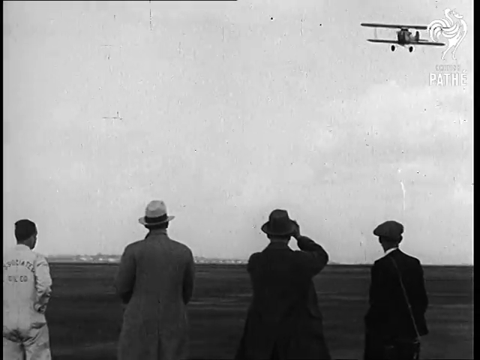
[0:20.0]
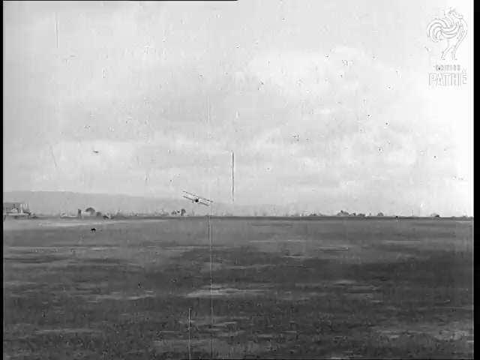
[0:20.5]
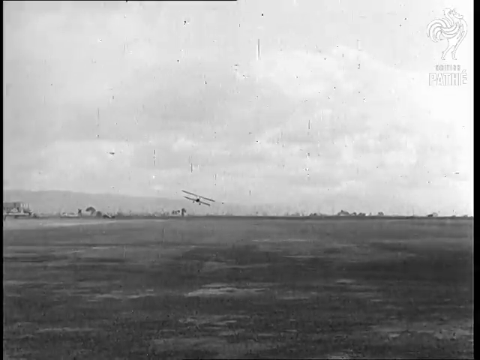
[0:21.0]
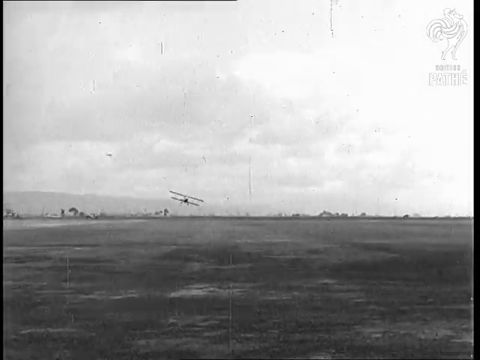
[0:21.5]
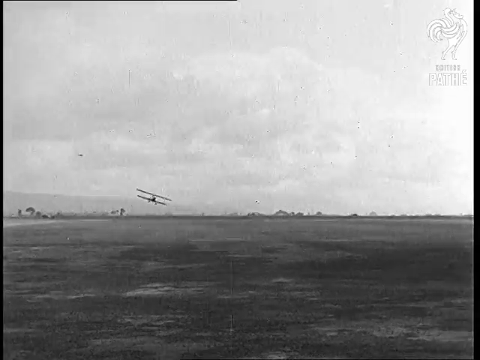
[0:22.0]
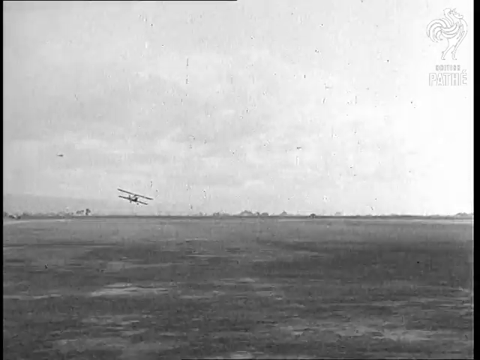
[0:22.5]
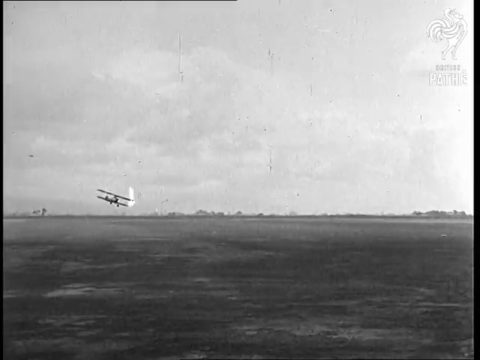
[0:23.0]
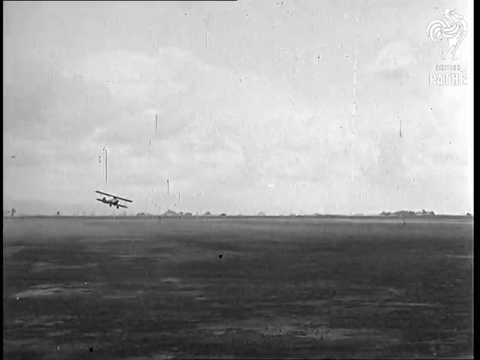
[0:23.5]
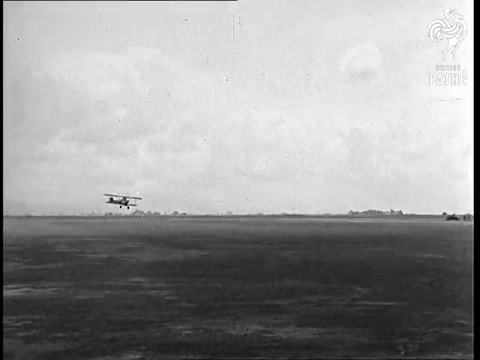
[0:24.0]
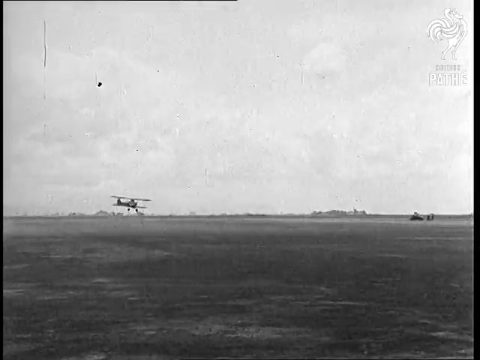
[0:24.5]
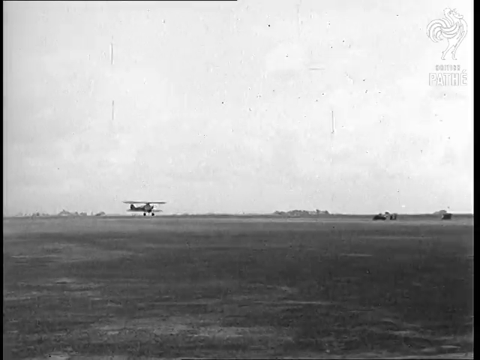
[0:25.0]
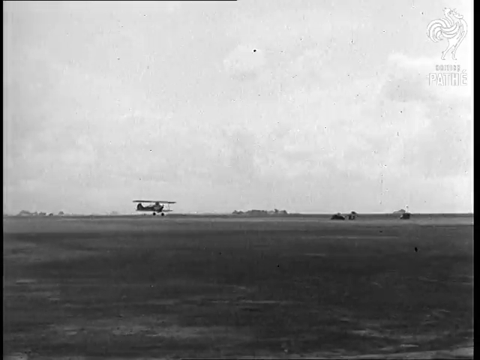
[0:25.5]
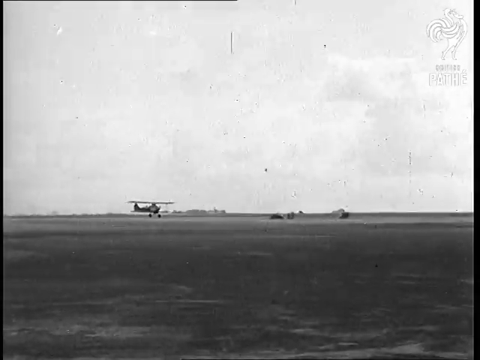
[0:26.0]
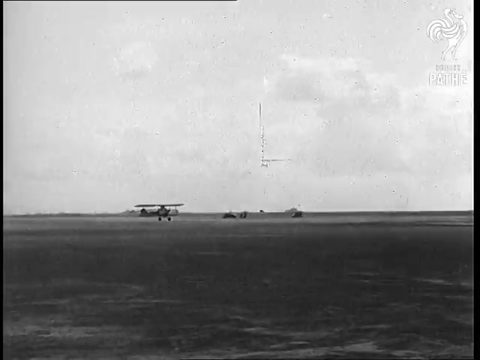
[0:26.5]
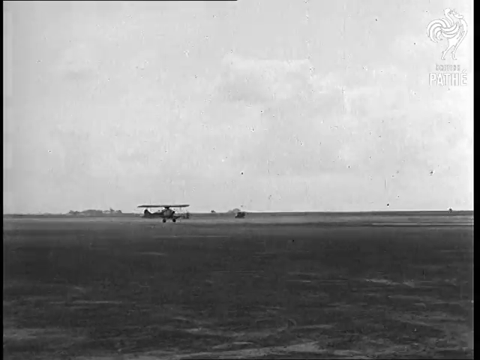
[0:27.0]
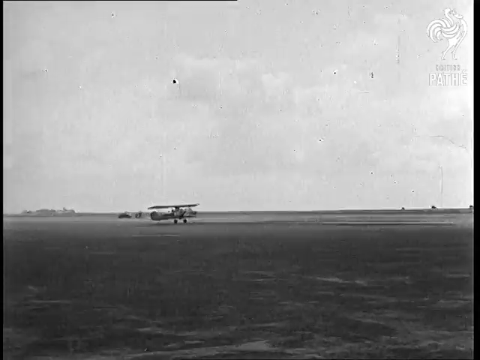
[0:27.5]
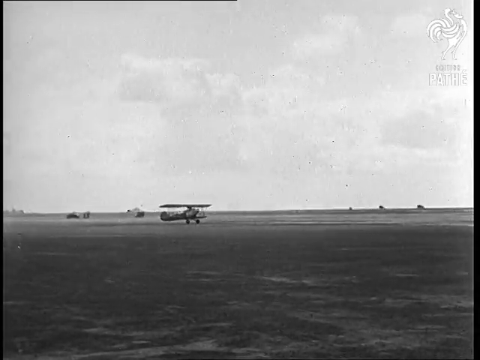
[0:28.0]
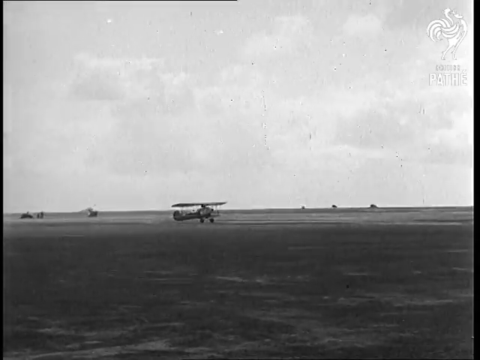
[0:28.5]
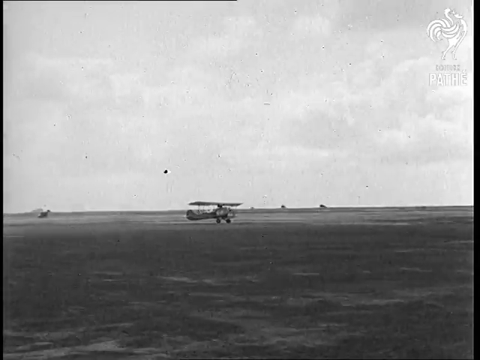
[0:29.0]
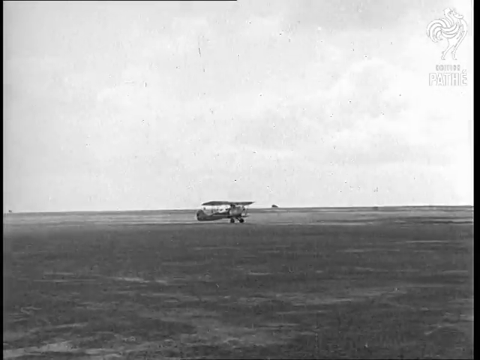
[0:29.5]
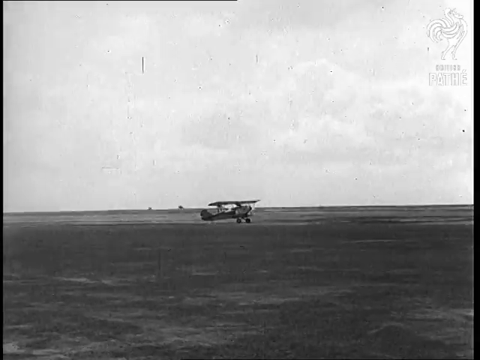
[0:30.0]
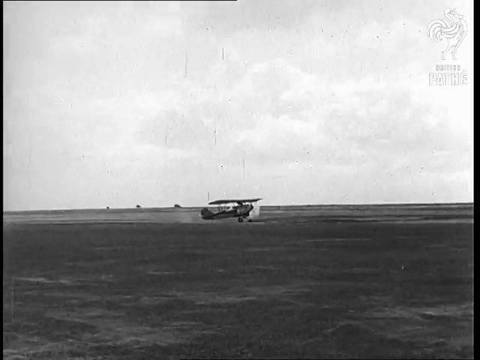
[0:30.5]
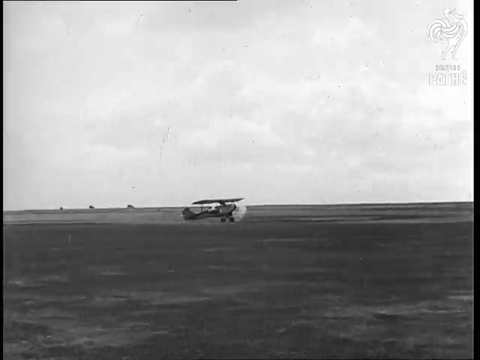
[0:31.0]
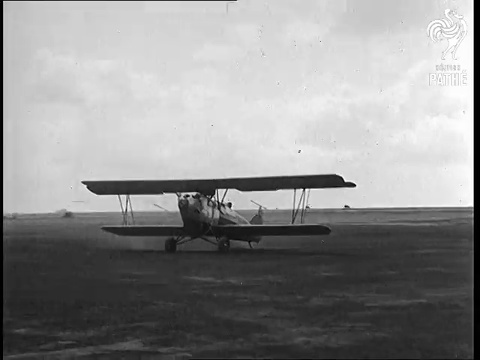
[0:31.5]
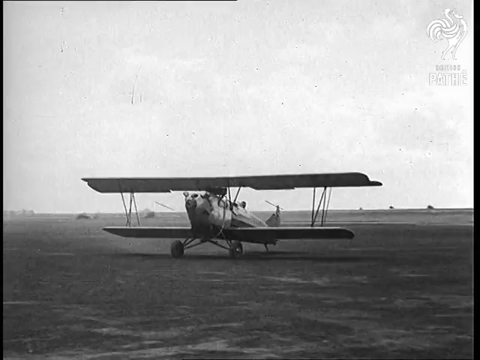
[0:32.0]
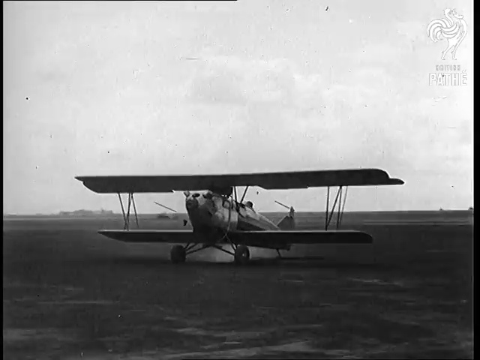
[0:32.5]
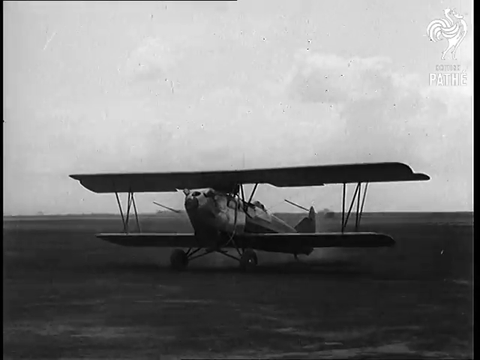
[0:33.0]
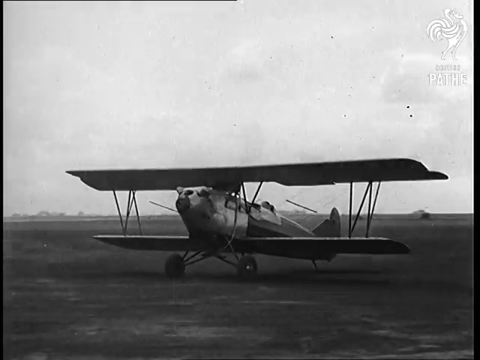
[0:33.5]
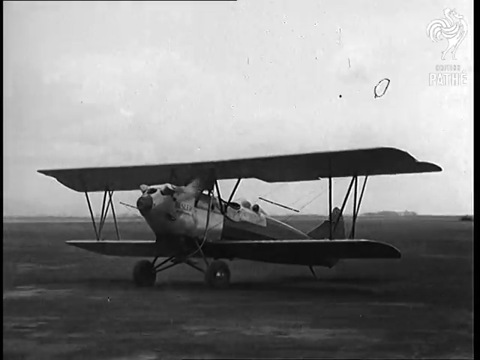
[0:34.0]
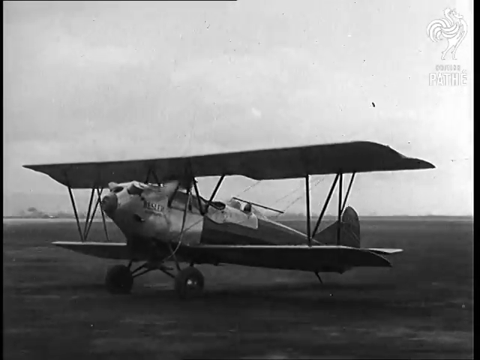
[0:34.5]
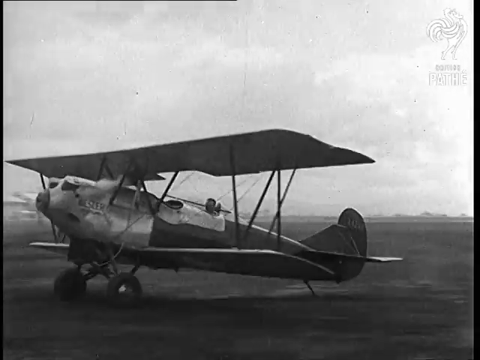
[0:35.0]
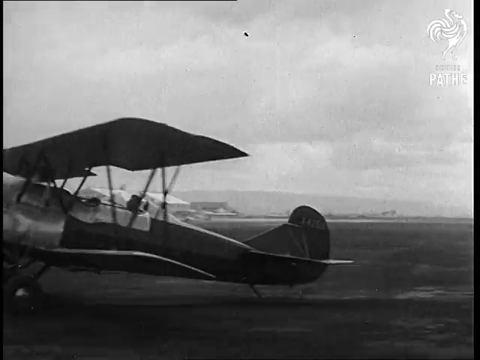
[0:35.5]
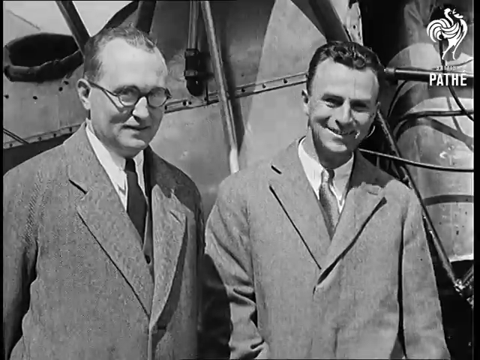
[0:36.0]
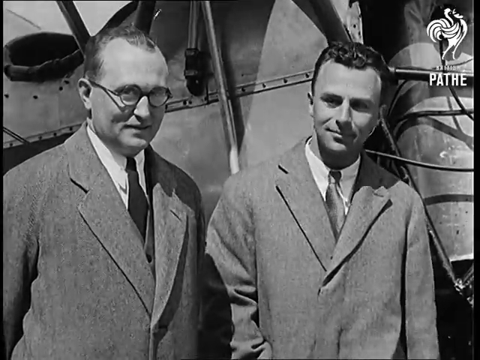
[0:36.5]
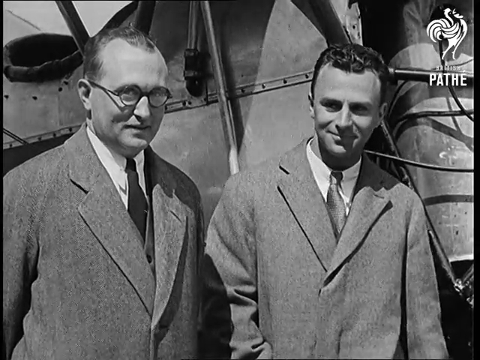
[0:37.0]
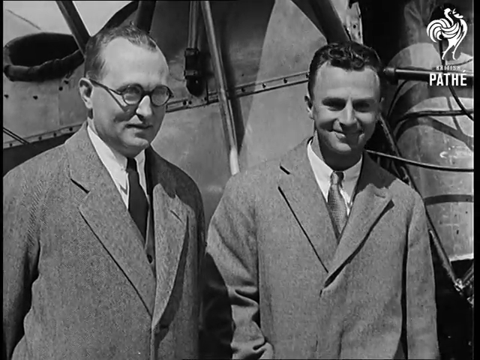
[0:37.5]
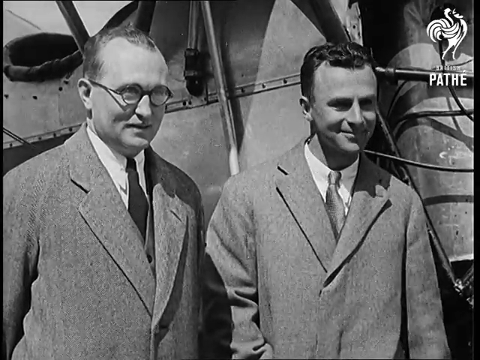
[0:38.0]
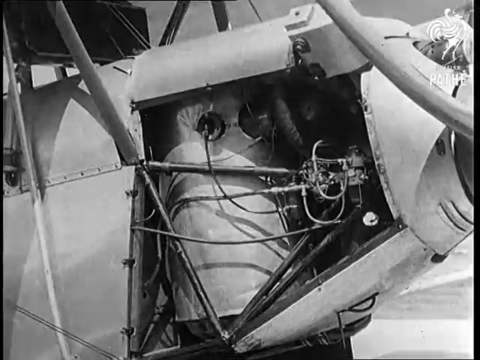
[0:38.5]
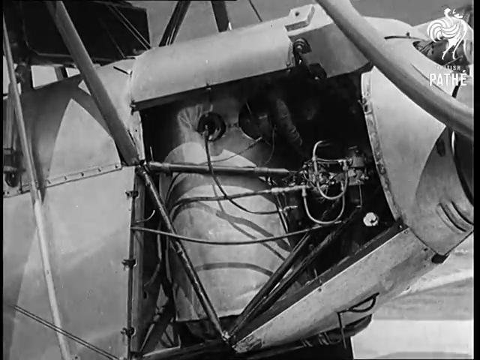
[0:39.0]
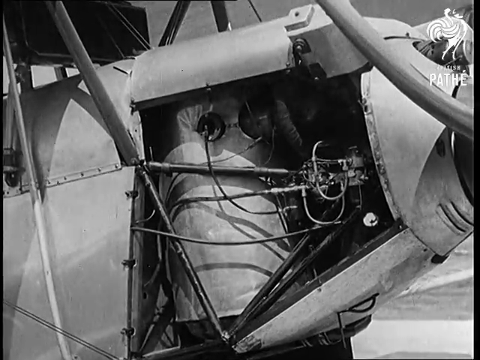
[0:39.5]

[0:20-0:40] The airplane is in the distance and almost coming toward the camera, flying very low, apparently maybe 30 to 40 feet off the ground. It then appears to be landing, moving roughly from left to right, and comes to a stop in the middle of the screen. The view transitions to what is possibly another angle of the airplane, which moves from right to left, rolling on the cement as though it has landed and is continuing to roll until it reaches its stopping point. Next comes black and white footage of two men more or less just standing there; the man on the right moves a little back and forth but does not say anything. The video then cuts to a close-up of the airplane's engine, with wires going in and out of it.